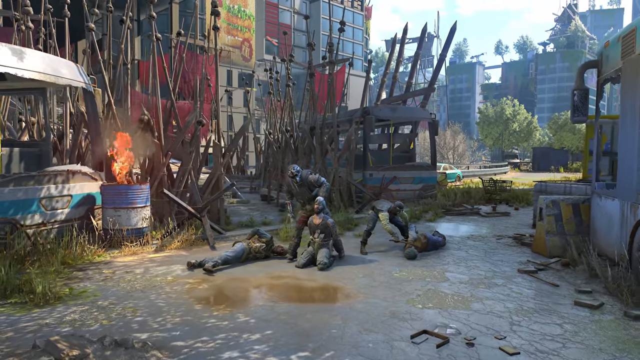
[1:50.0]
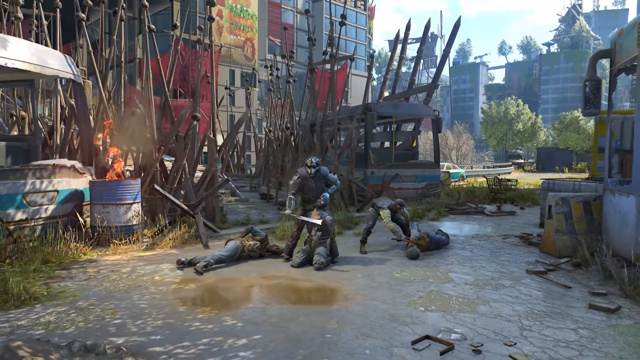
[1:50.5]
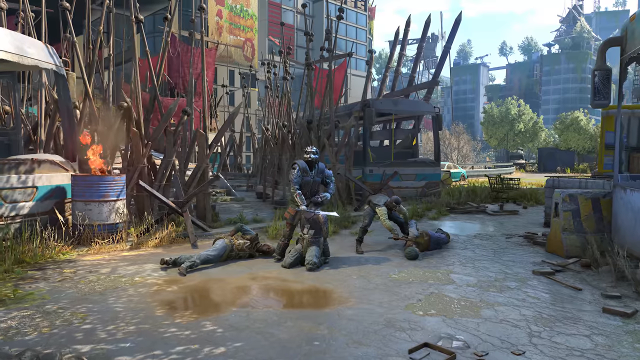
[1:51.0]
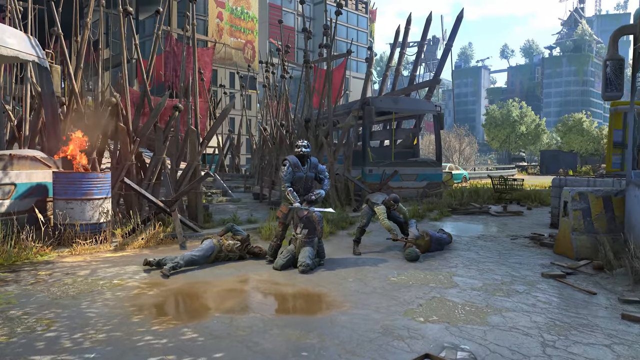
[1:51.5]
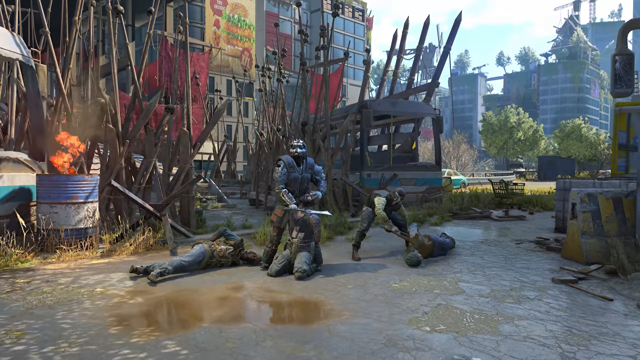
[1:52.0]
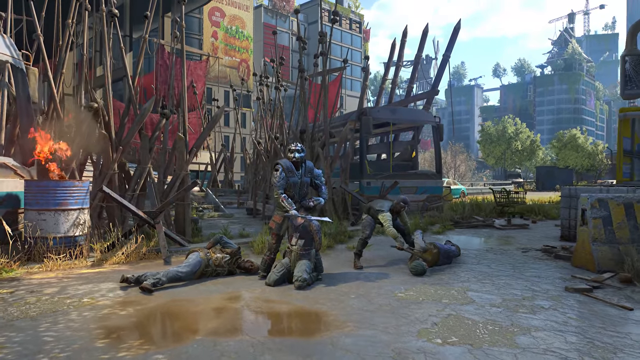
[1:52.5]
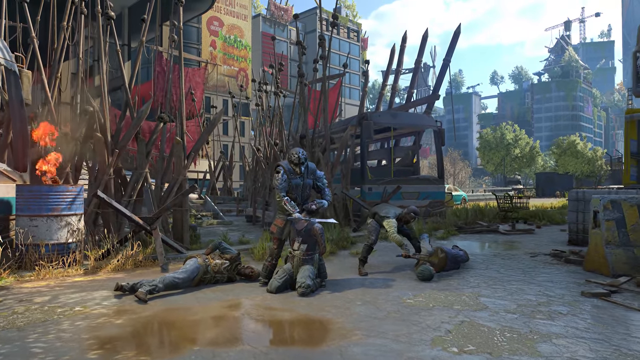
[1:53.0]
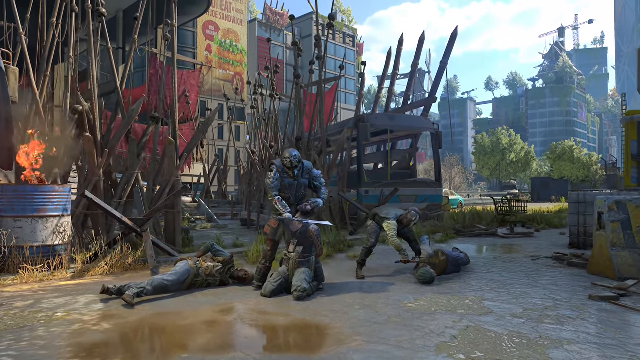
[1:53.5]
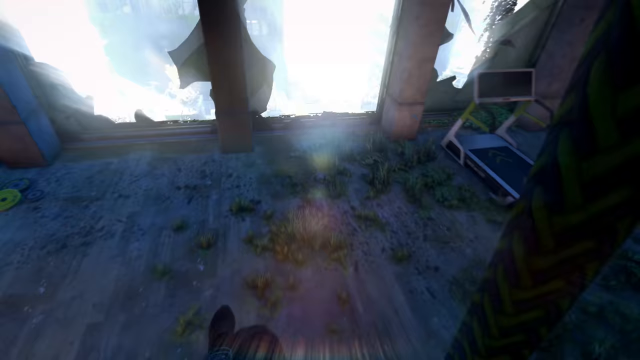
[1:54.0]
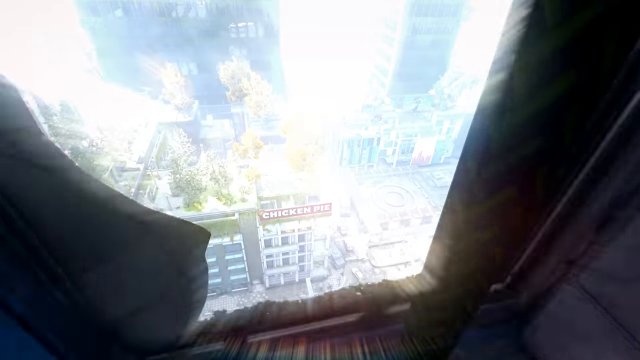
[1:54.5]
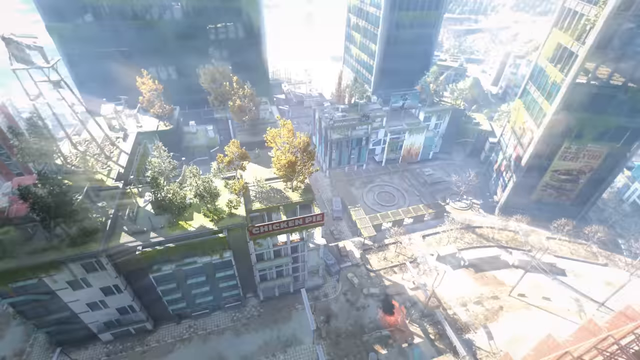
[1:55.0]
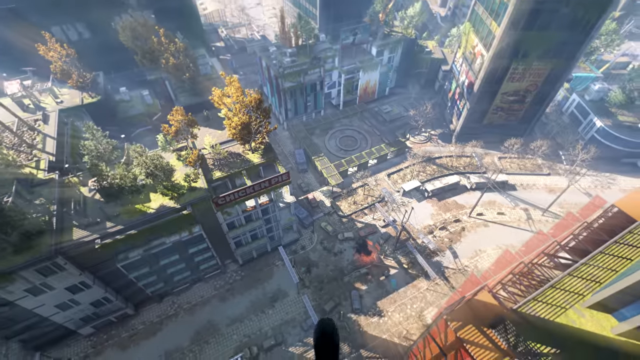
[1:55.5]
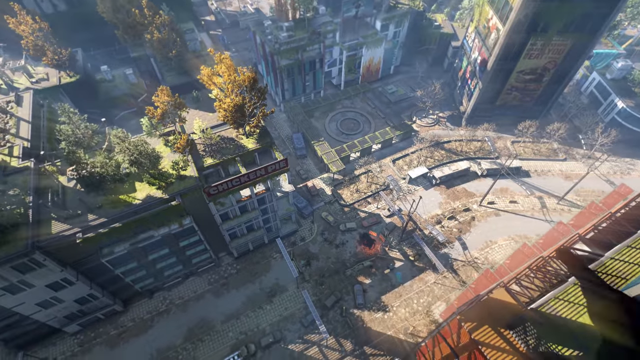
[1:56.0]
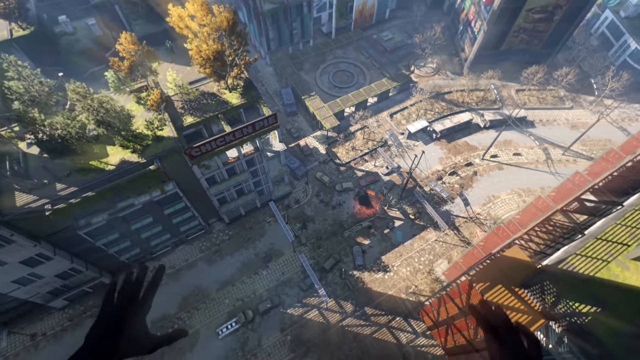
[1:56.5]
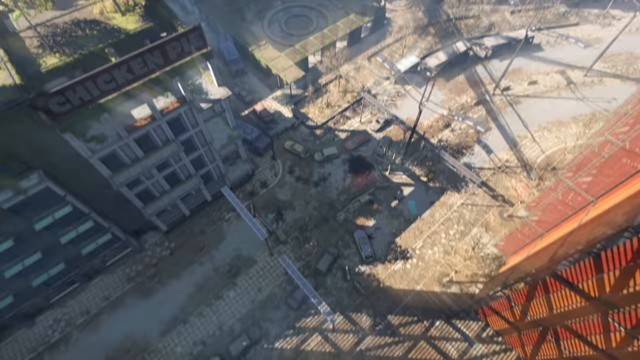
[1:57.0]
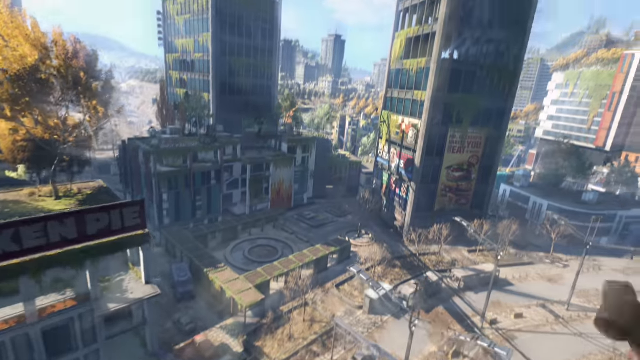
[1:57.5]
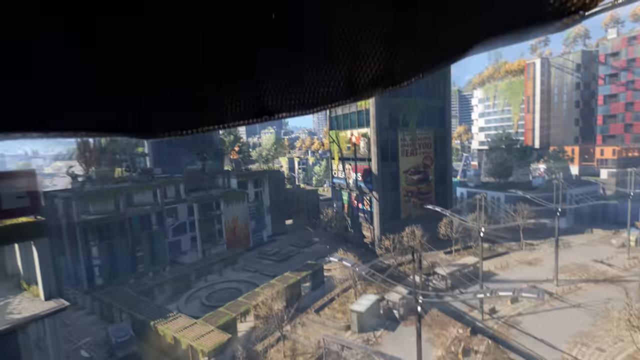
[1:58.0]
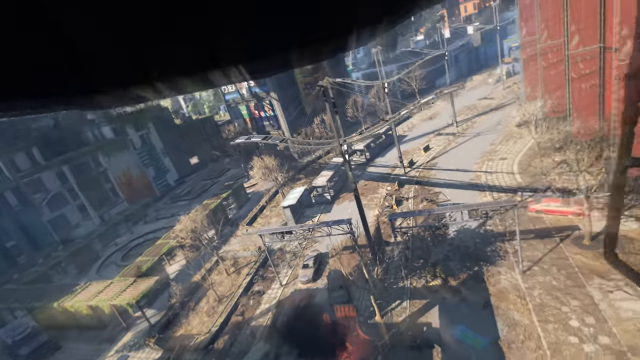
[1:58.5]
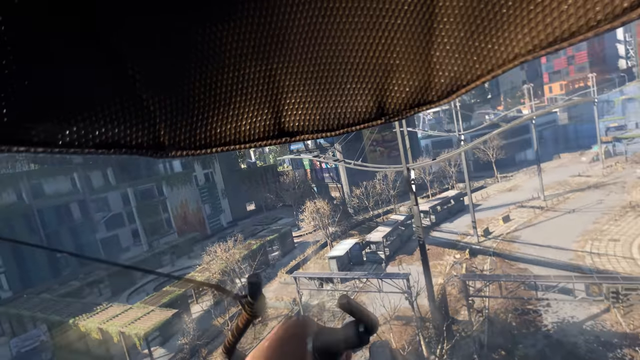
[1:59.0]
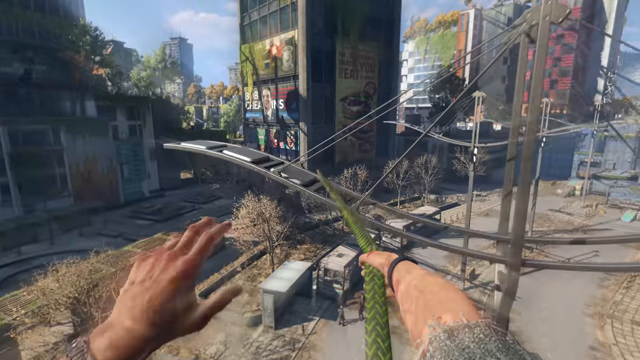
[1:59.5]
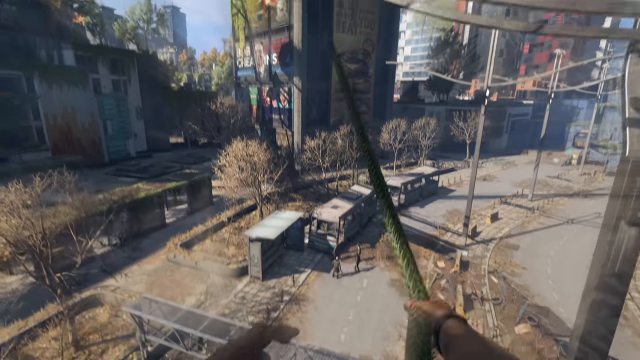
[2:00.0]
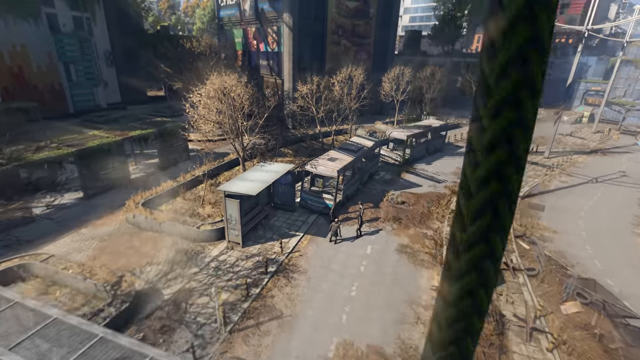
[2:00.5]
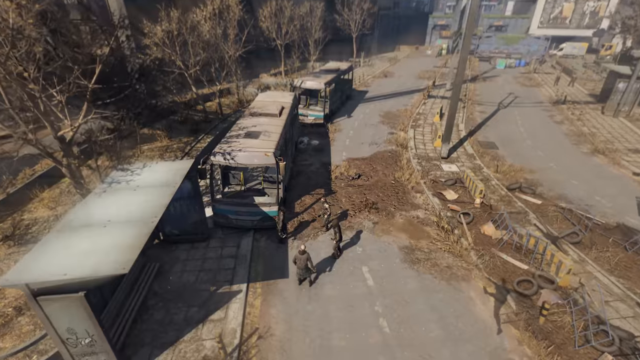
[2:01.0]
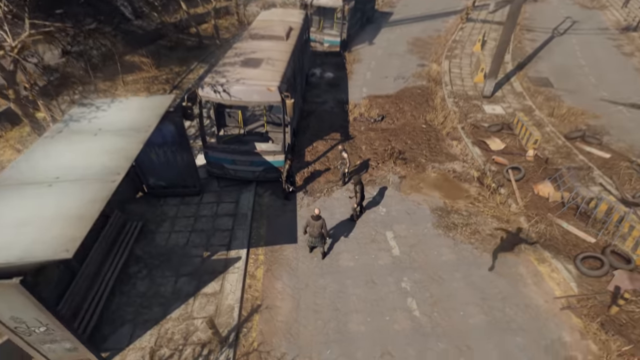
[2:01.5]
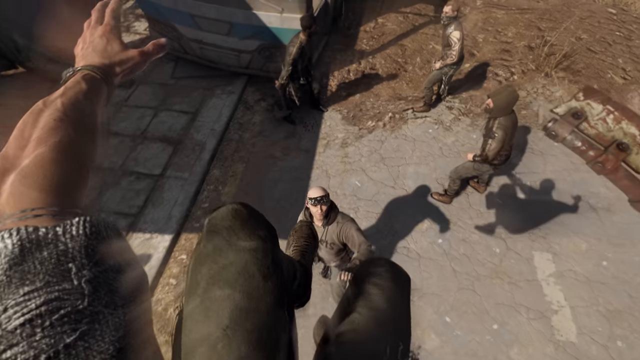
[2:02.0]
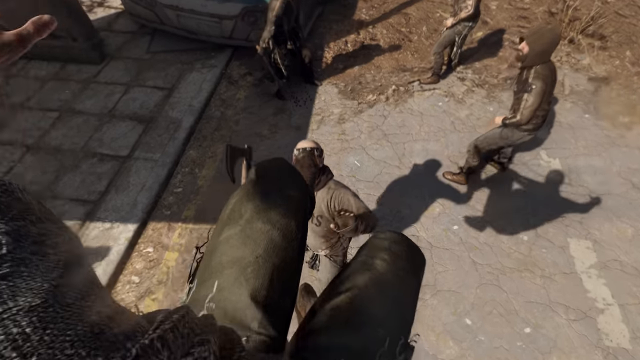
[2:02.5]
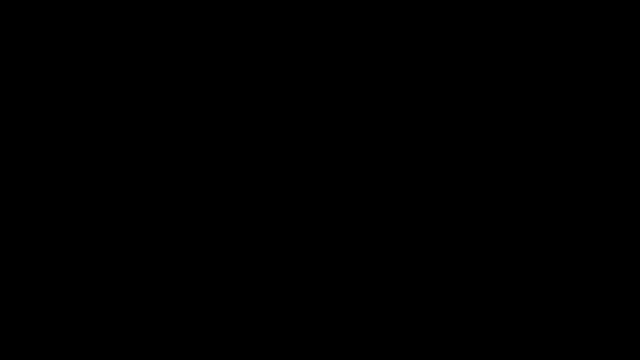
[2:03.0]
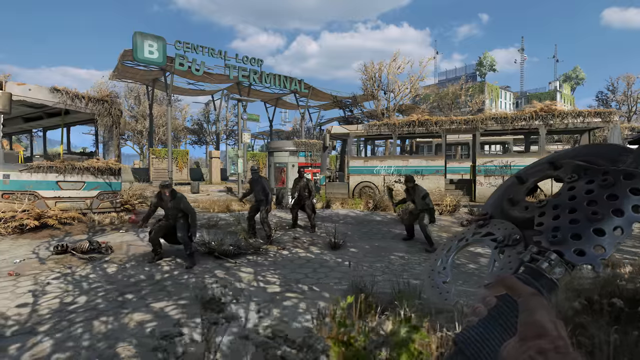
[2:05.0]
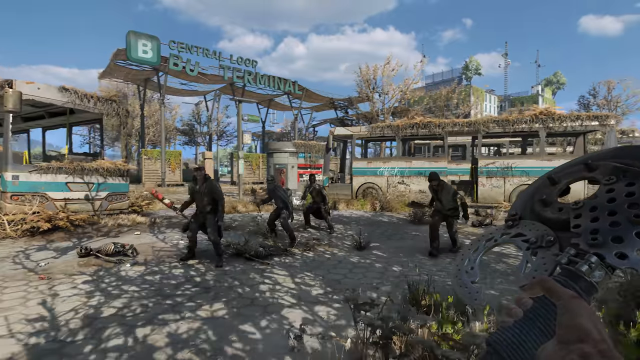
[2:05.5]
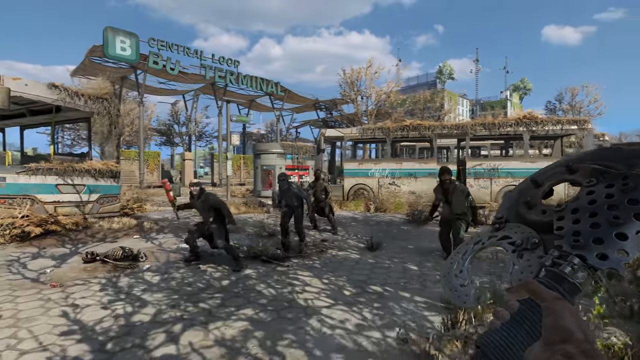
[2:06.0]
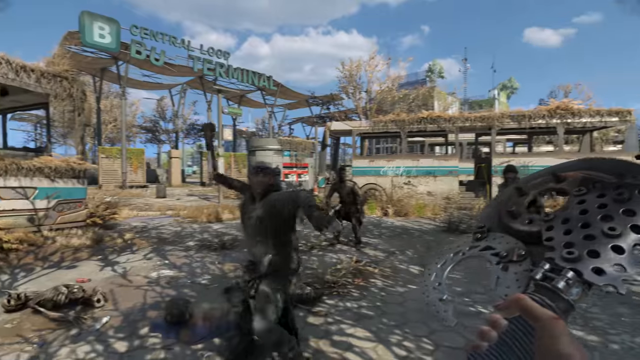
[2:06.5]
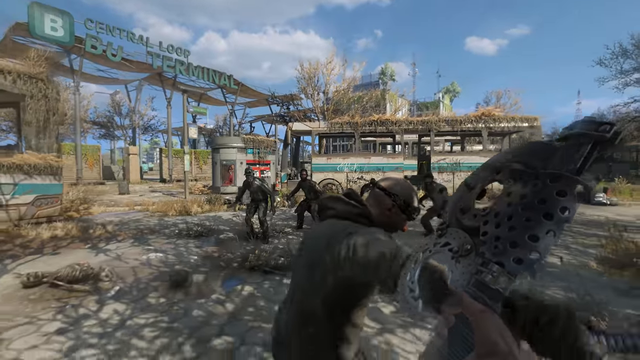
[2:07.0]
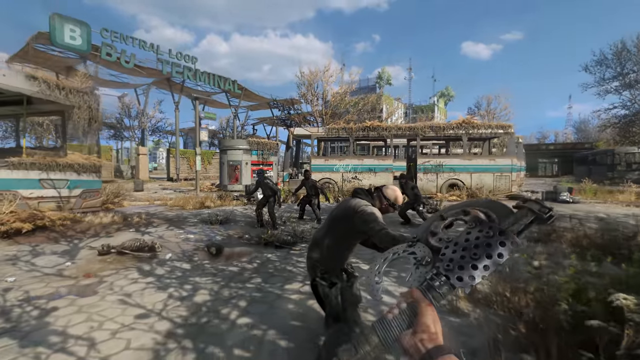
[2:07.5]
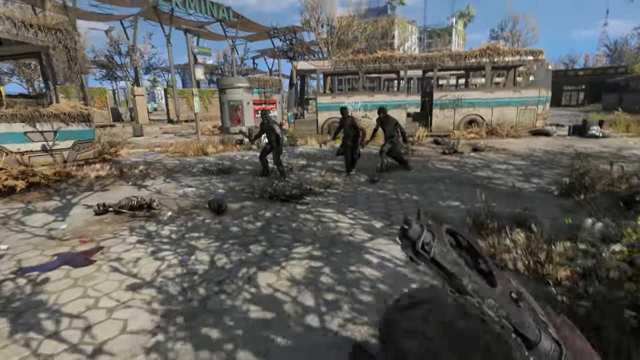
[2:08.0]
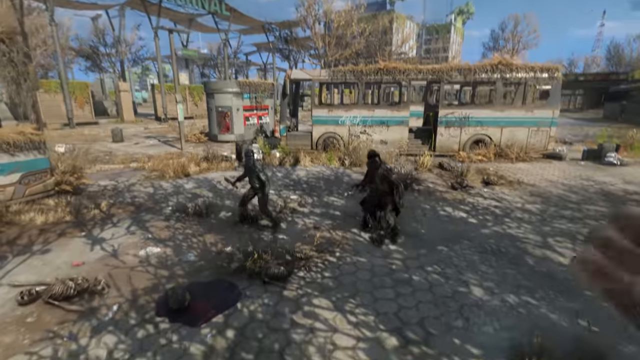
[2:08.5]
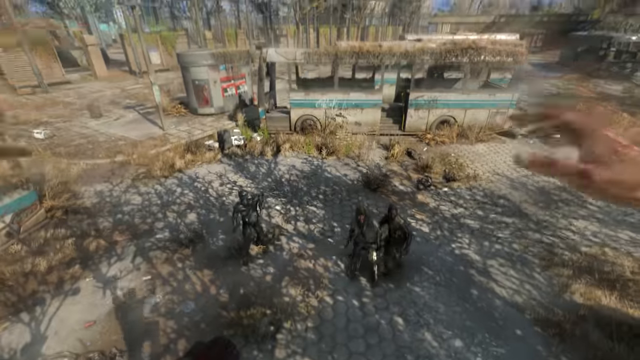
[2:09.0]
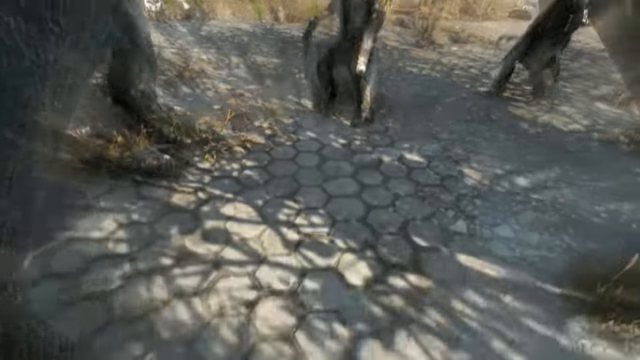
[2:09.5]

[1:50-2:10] People with their wrists tied are next to abandoned buildings, with another person who is not a zombie. Two of the tied people are lying down and one is on his knees, with two abandoned buses right next to them. The kneeling man's head is pulled back and there is what looks like a sword at his neck. From the main character's point of view, his hands and fair-skinned arms are visible as he jumps. At one point he jumps down and kicks somebody in the face, making them bleed. He then has some type of medieval sword or blade and fights three people who do not look like zombies.